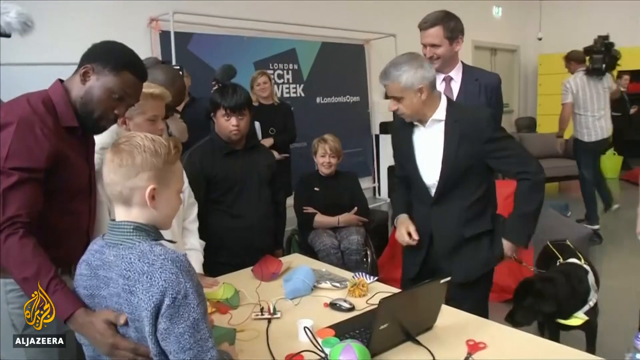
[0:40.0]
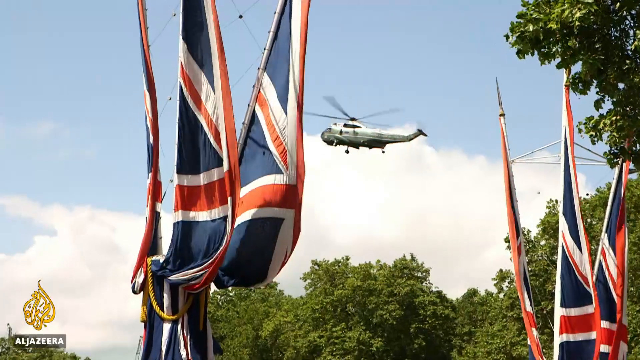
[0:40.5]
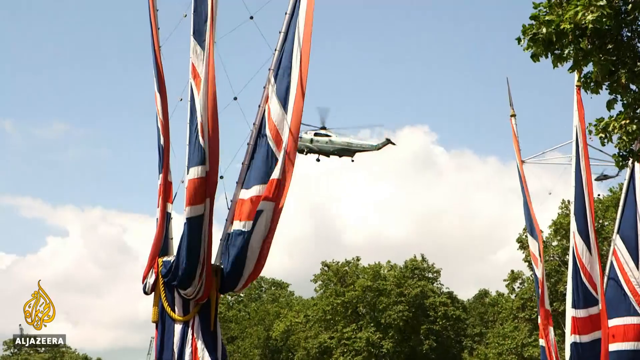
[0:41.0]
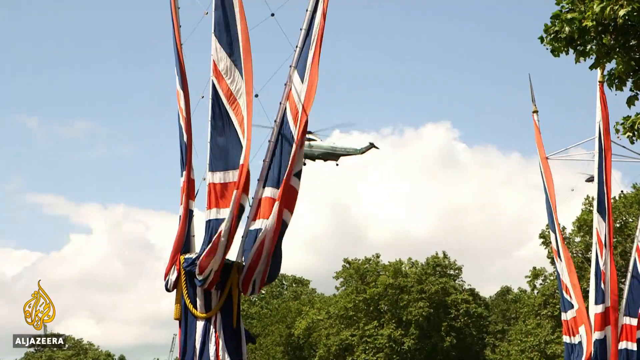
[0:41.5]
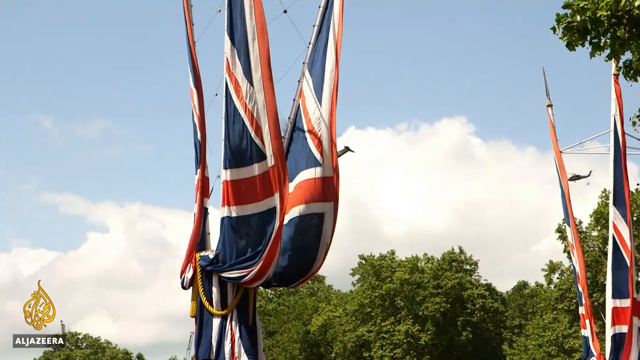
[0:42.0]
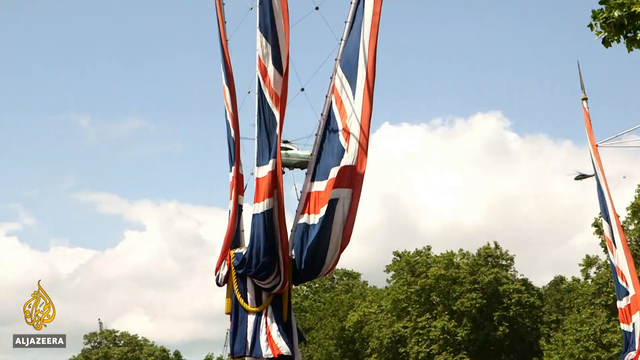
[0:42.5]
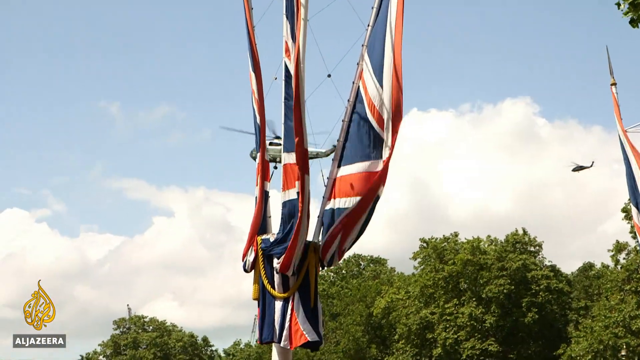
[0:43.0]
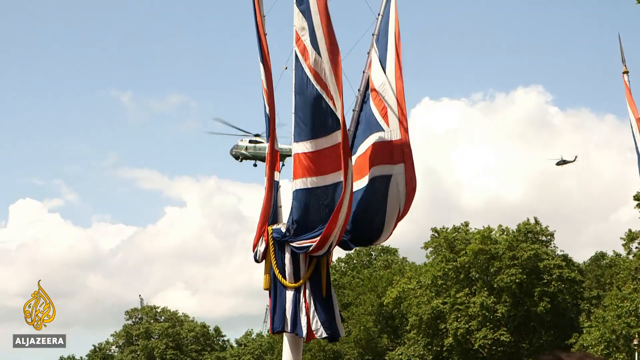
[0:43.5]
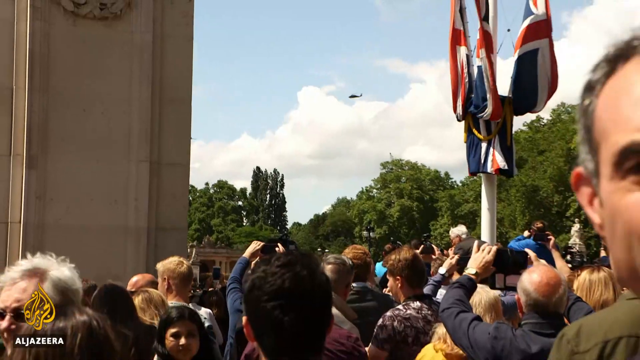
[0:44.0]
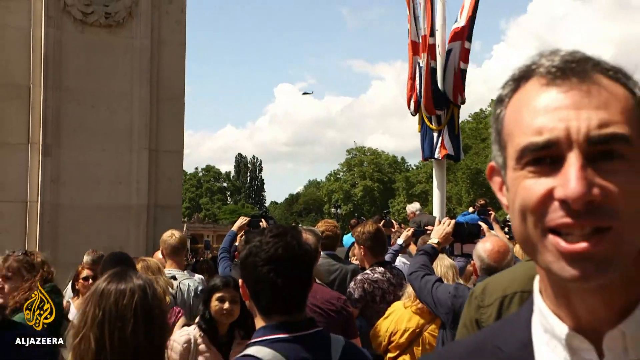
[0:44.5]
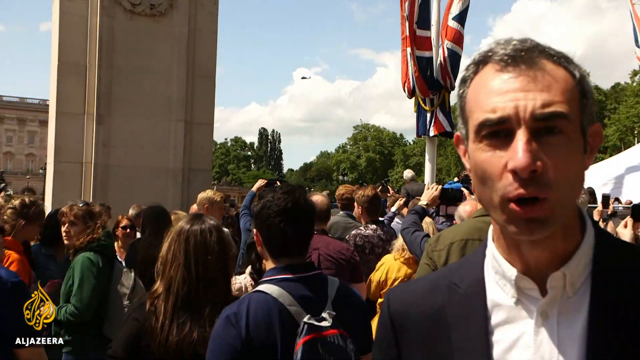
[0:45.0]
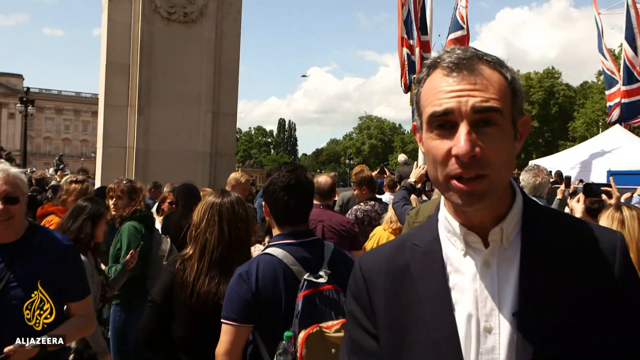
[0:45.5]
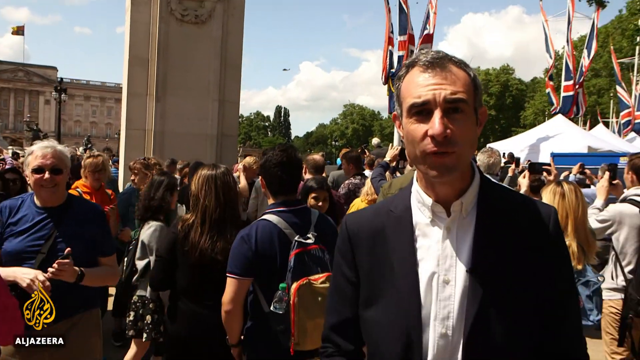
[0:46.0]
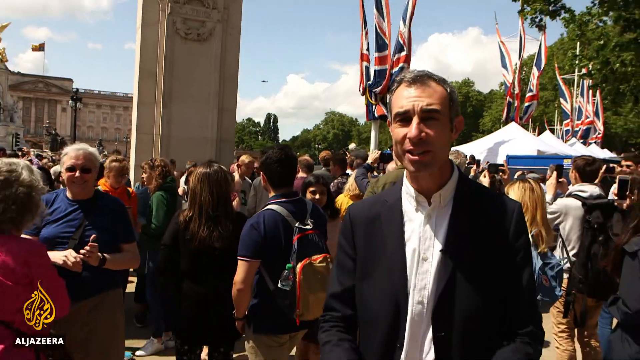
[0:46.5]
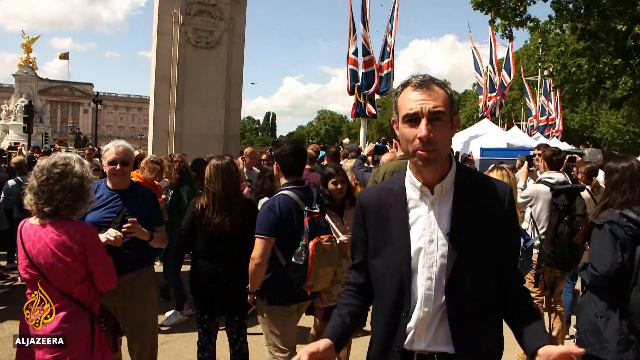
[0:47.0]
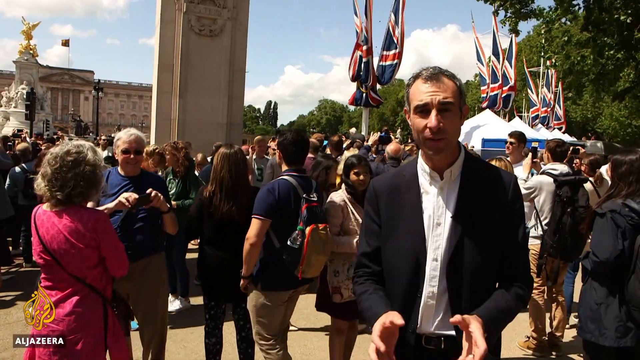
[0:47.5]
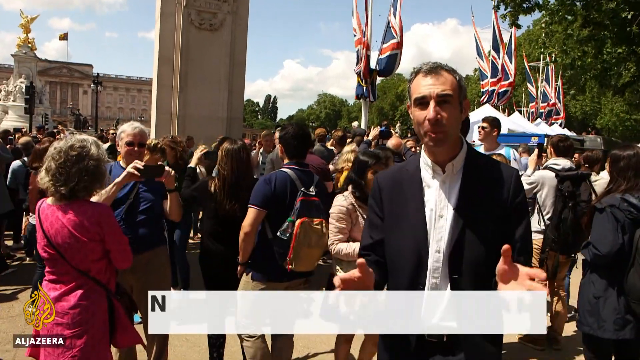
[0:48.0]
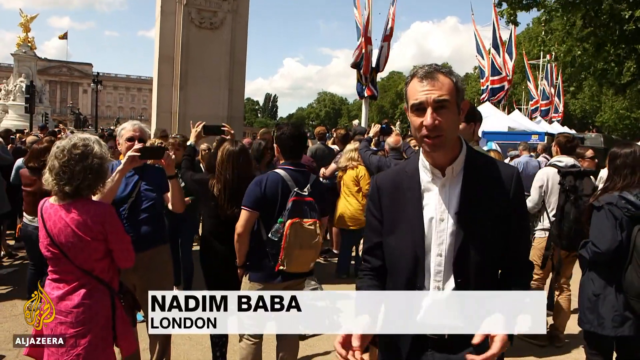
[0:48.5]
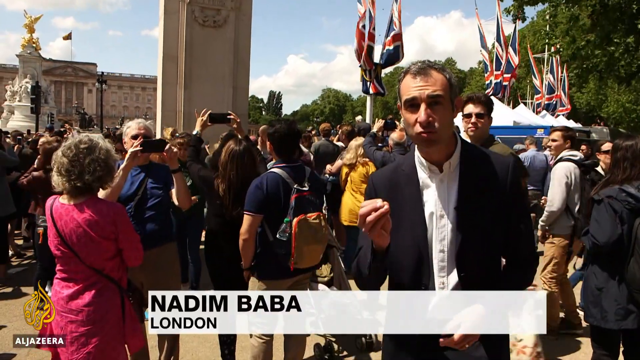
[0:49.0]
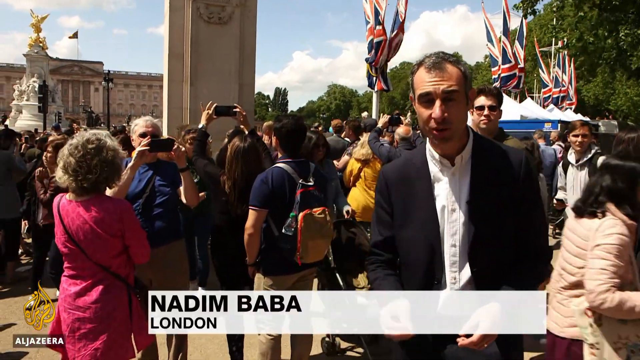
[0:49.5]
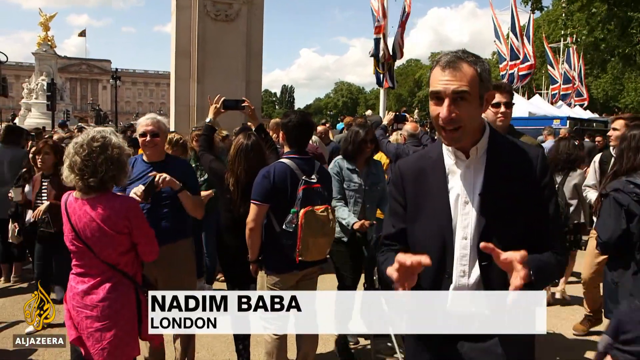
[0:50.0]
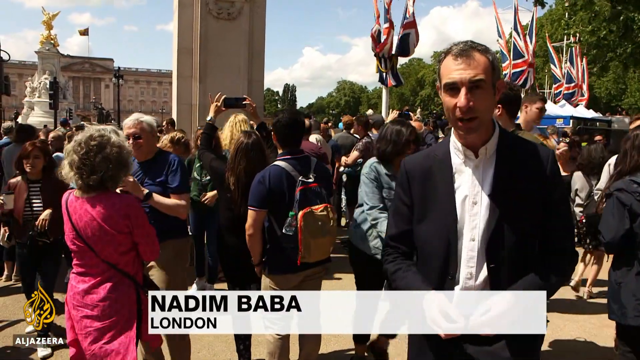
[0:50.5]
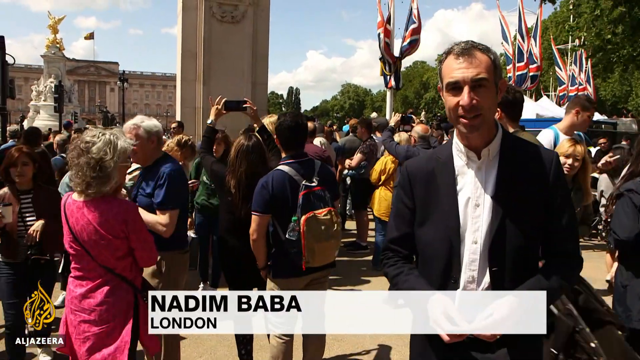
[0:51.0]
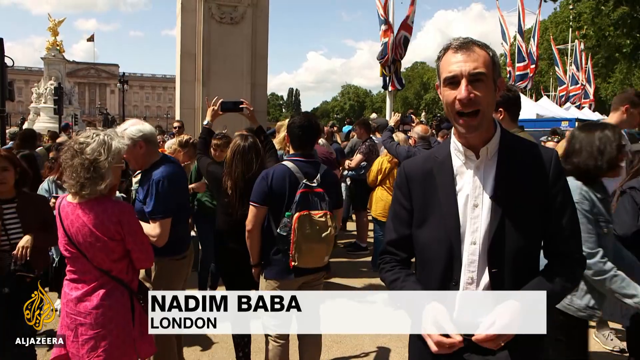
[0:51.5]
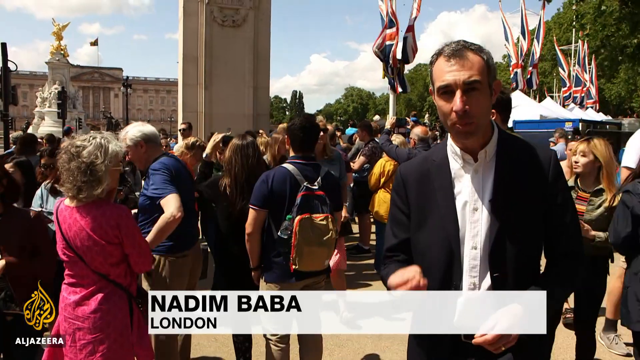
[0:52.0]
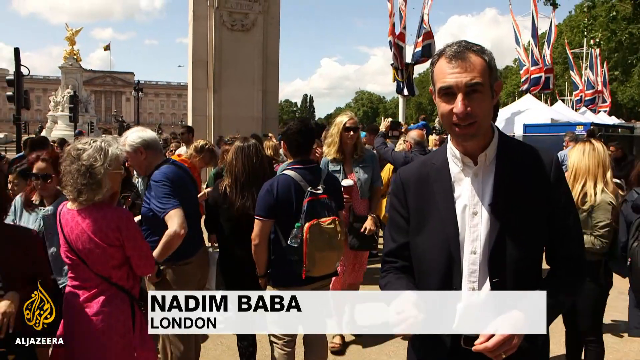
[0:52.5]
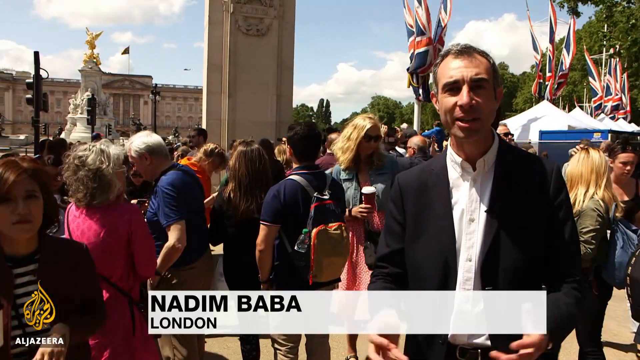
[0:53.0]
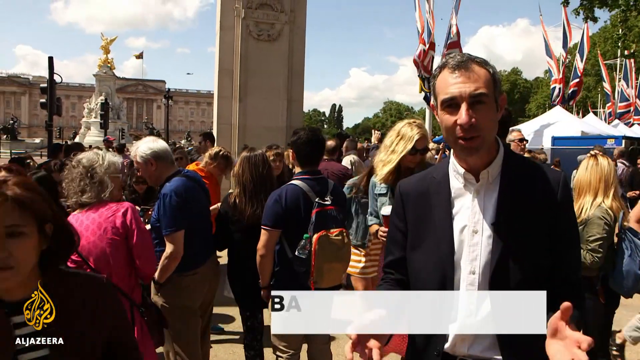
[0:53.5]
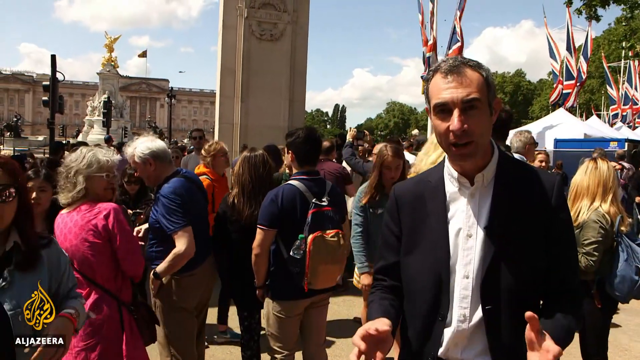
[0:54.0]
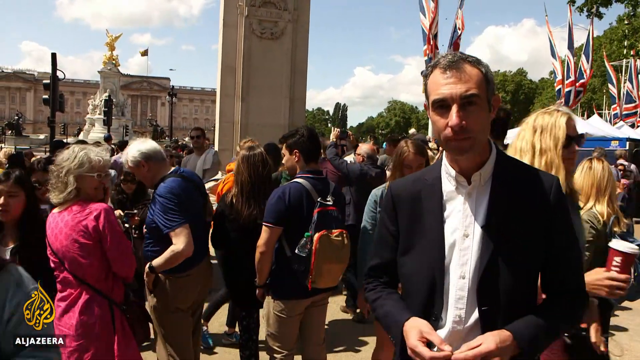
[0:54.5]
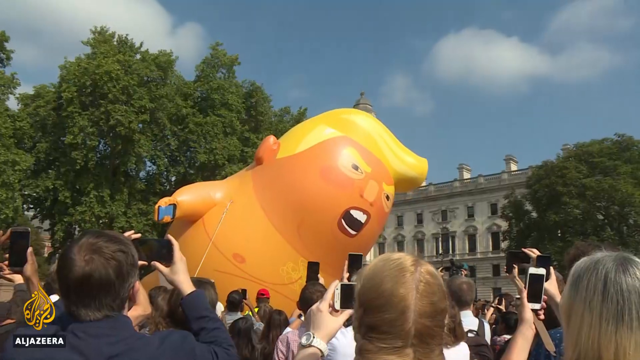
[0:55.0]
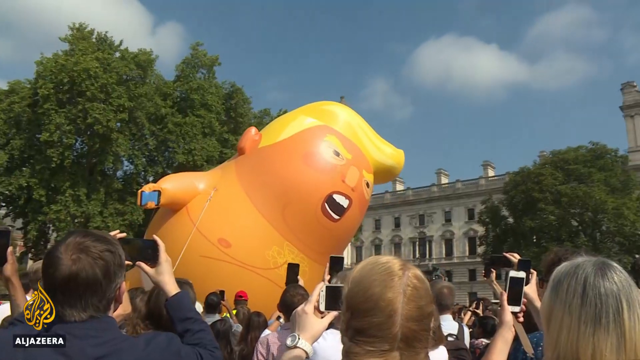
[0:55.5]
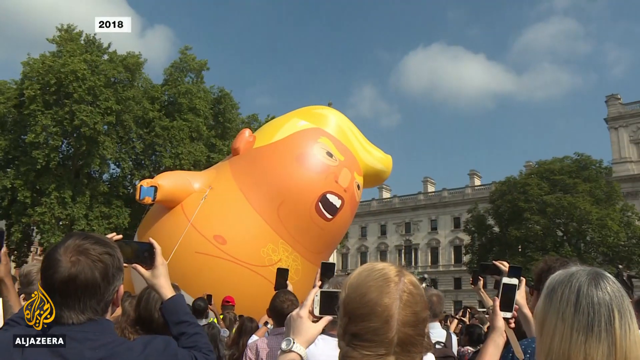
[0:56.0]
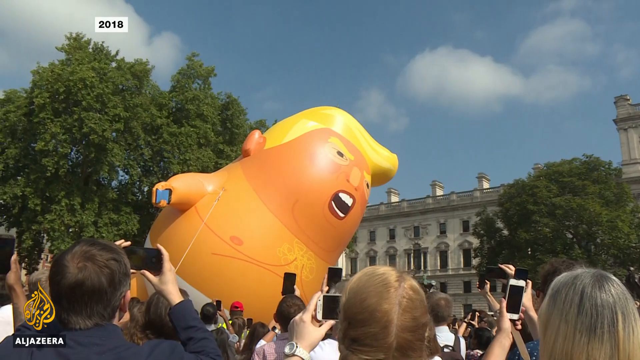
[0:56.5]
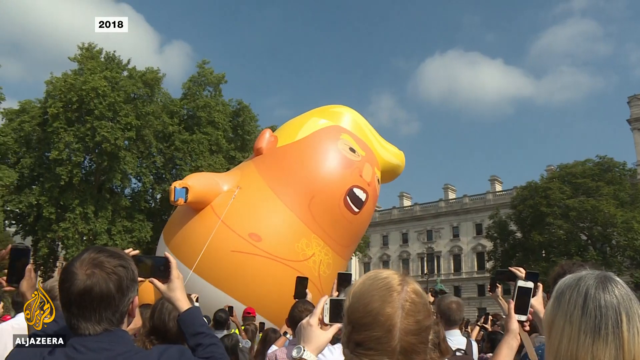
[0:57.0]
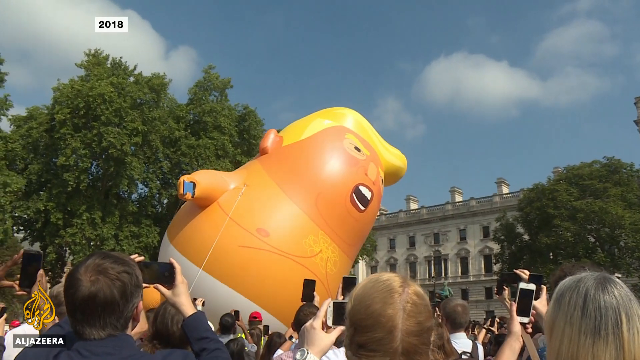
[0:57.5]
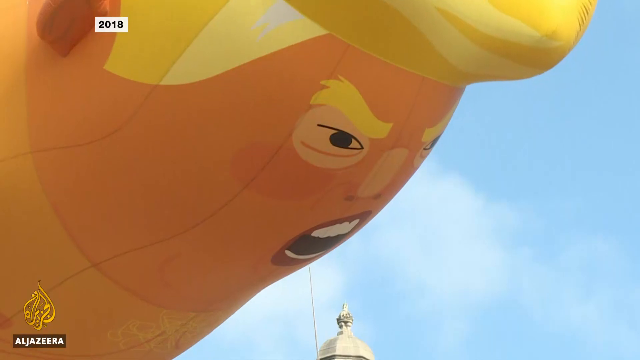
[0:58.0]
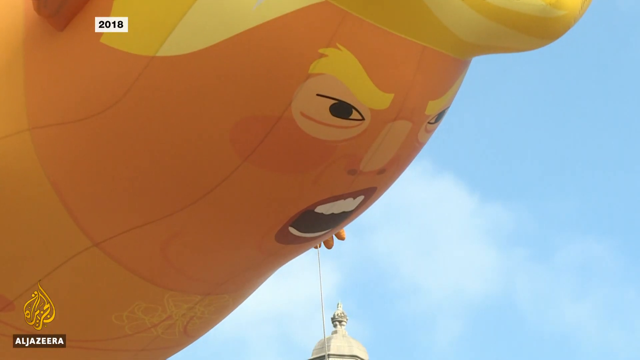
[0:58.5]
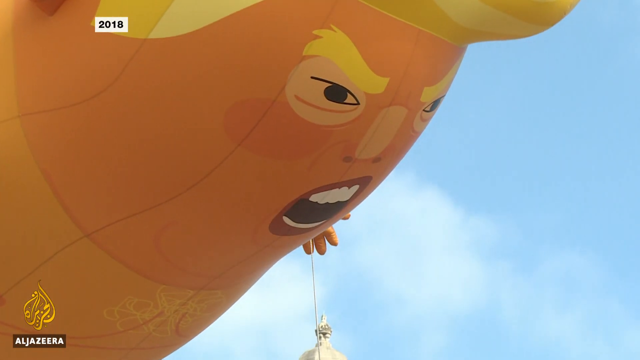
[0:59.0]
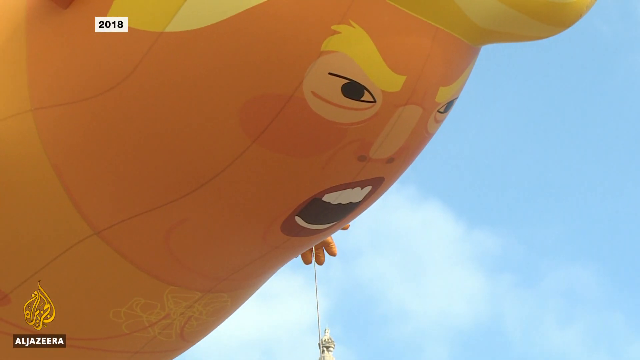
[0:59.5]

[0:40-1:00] A man in a black suit, sort of facing the camera, stands in front of a desk. On the other side of the desk, on the left side of the screen, is a young boy seen from the back. Also on the left is an African-American man in a burgundy shirt with his right arm extended and his hand on the boy's back. Other kids are standing around. Then a helicopter flies through the sky with flags of the United Kingdom in the foreground; there are actually two helicopters. The camera zooms out, showing the helicopters and a man in a suit talking while facing the camera, with a crowd of people behind him. Text at the bottom of the screen reads "Nadim Baba" and below that "London". The man holds his right hand out in front of him with the fingertips and thumb touching, then holds both hands out in front of him. People behind him take pictures, and people on the left side of the screen walk toward the camera. Next, a crowd of people at the bottom of the screen is seen from the back of their heads. In front of them is a large bulbous balloon that looks like Donald Trump, with gold hair, and behind it are trees, a blue sky and a building. The camera zooms out on the balloon, which shows Trump with a funny face.